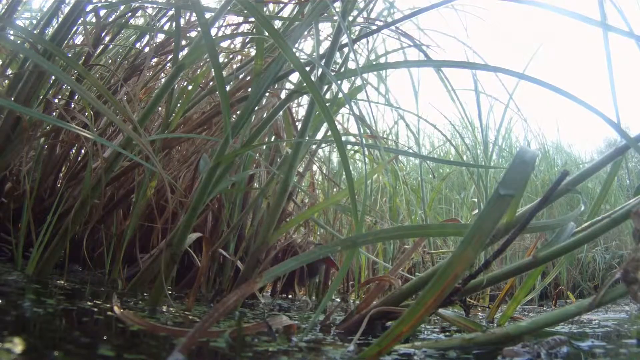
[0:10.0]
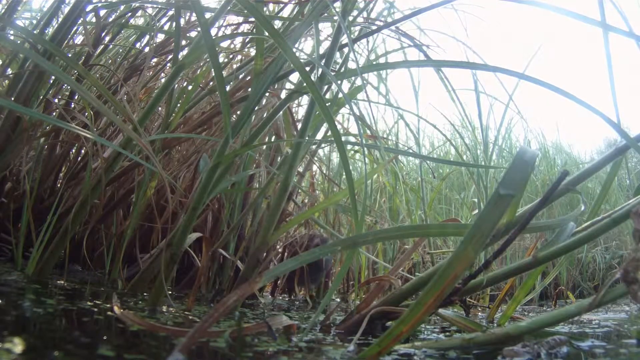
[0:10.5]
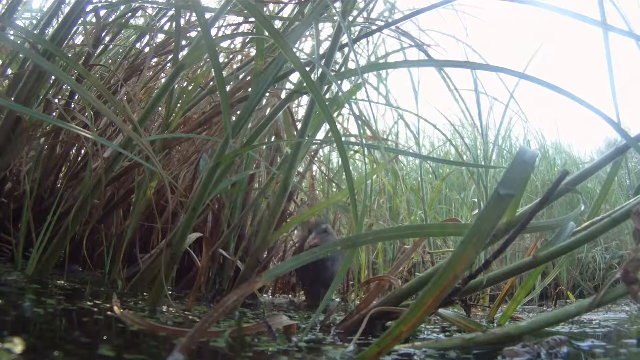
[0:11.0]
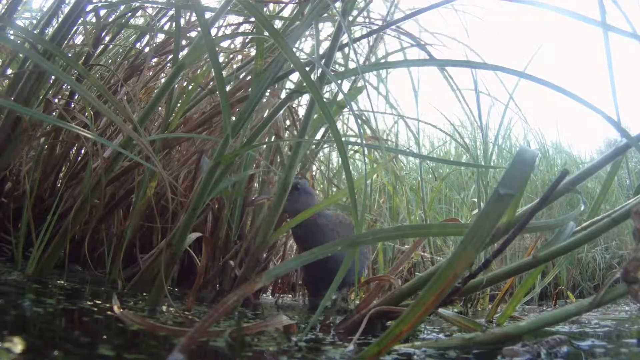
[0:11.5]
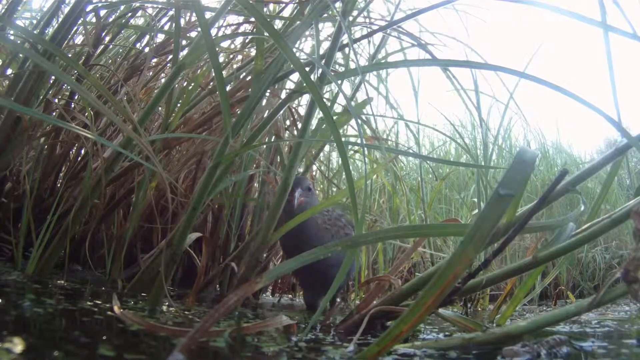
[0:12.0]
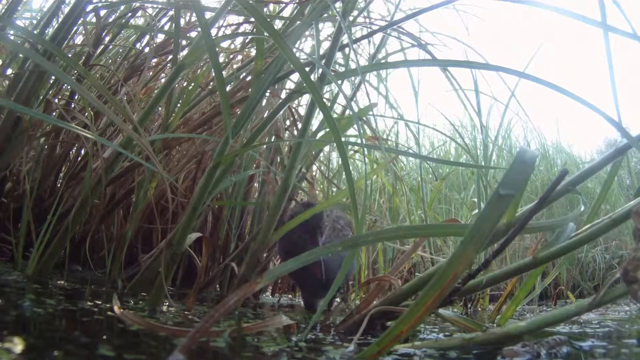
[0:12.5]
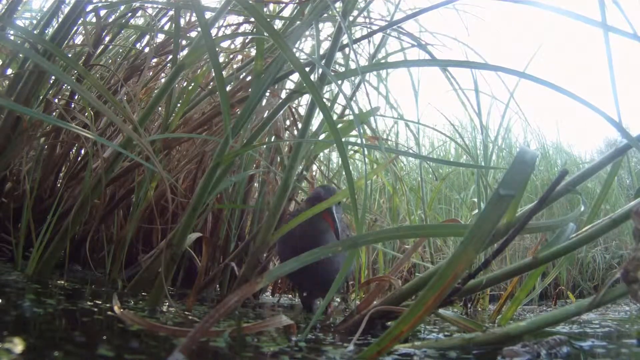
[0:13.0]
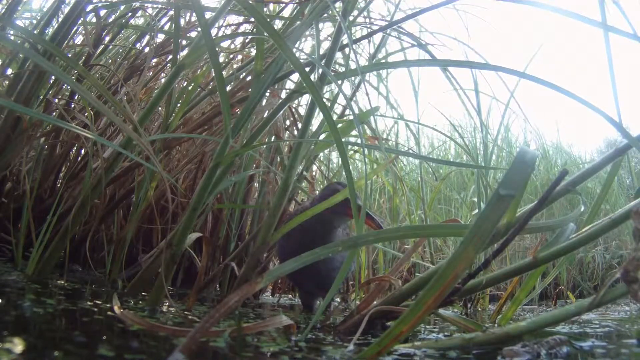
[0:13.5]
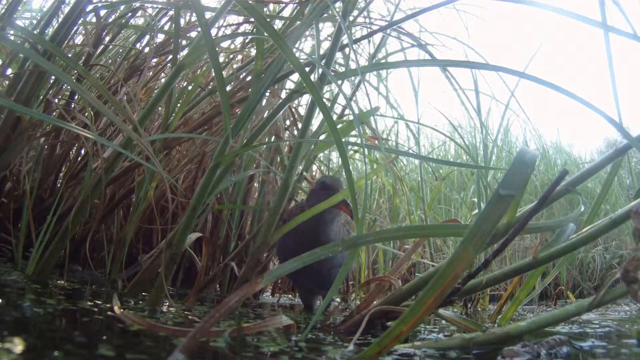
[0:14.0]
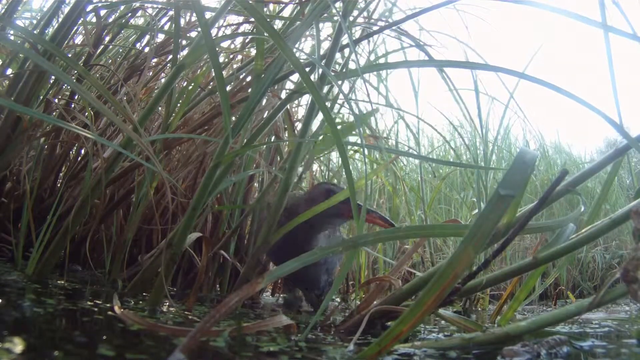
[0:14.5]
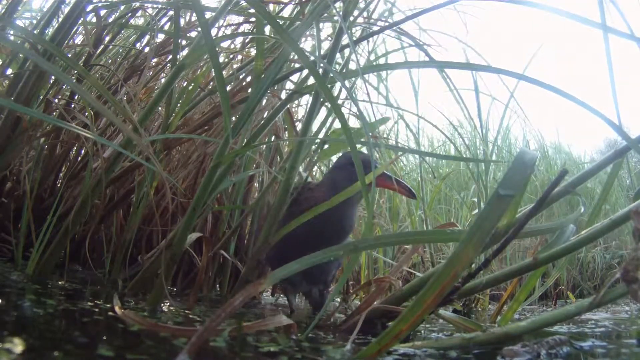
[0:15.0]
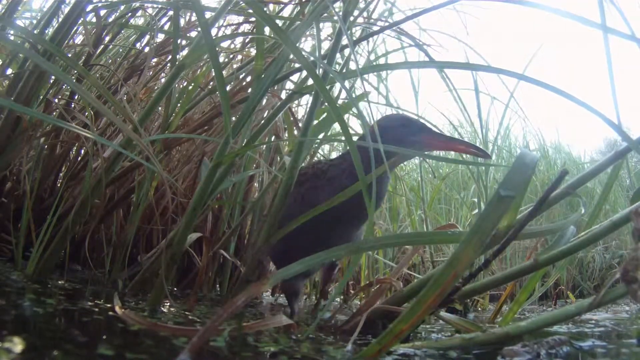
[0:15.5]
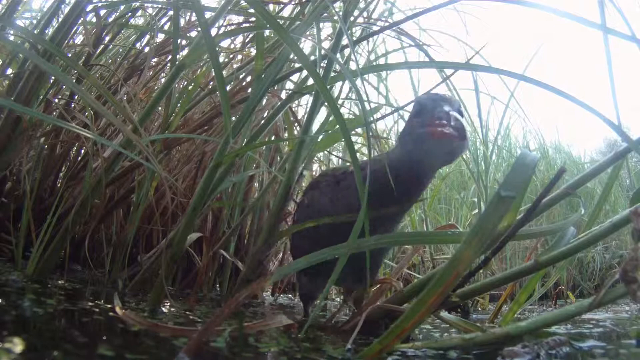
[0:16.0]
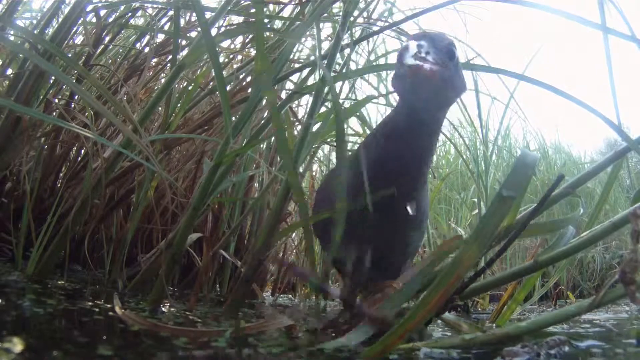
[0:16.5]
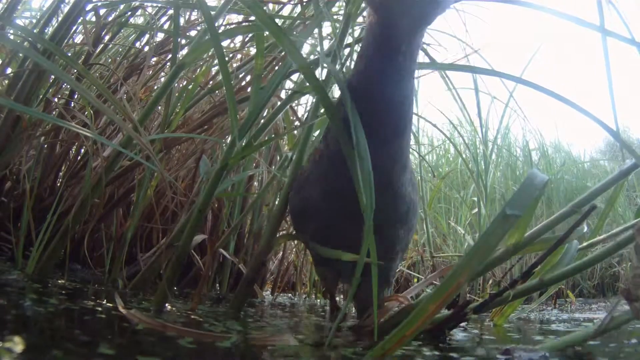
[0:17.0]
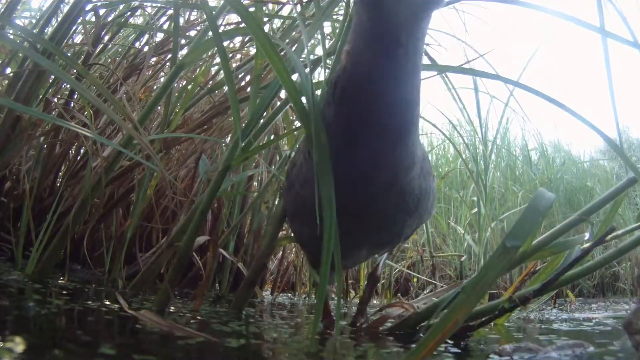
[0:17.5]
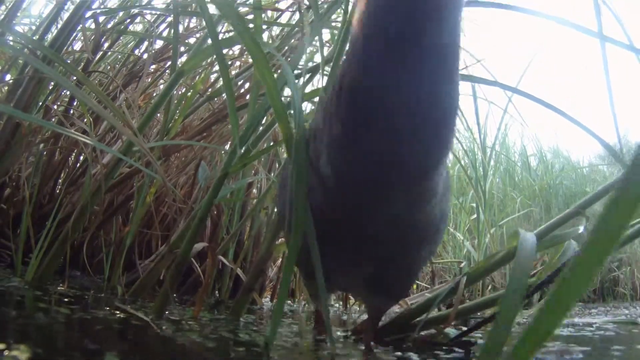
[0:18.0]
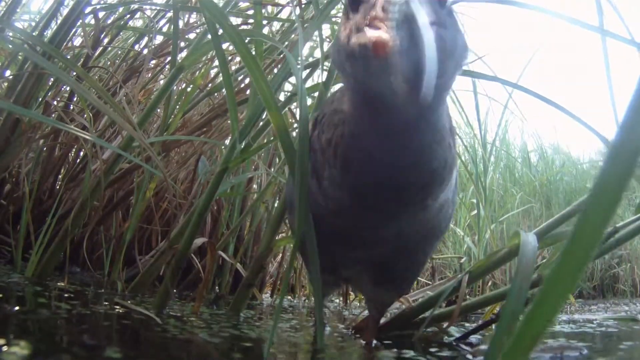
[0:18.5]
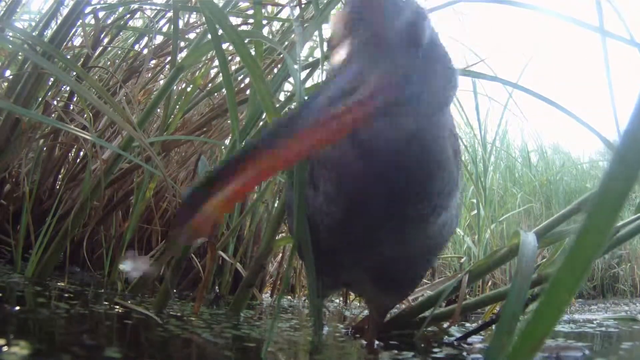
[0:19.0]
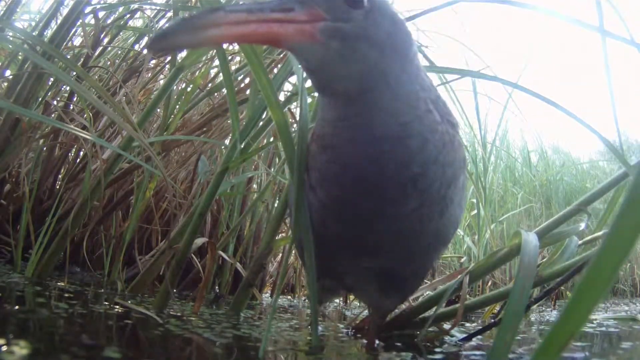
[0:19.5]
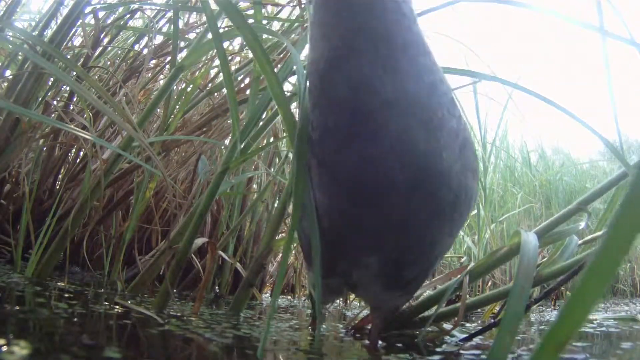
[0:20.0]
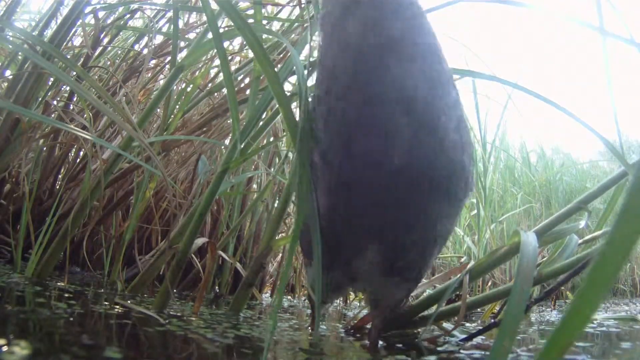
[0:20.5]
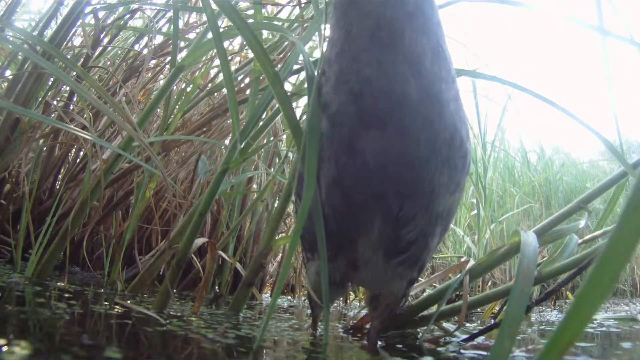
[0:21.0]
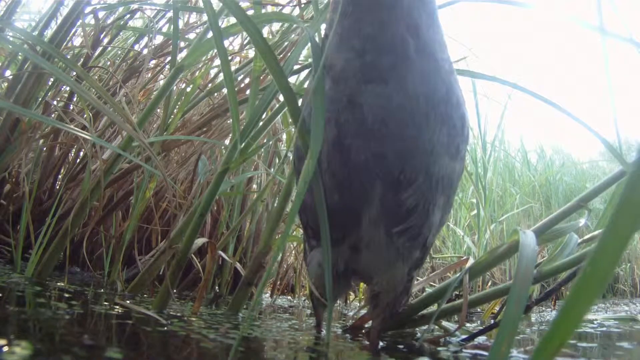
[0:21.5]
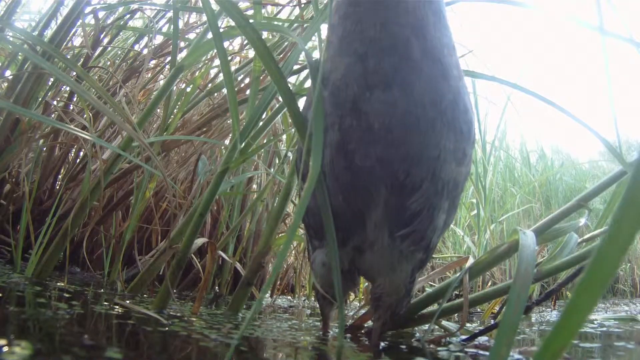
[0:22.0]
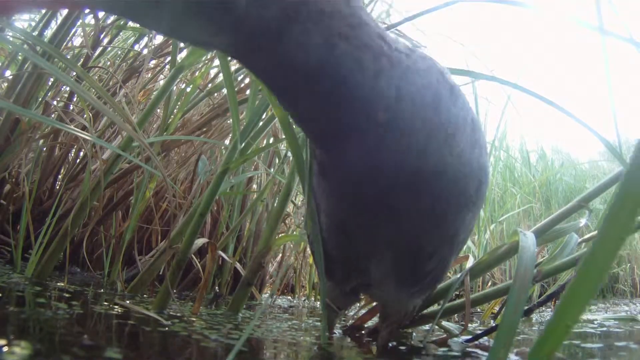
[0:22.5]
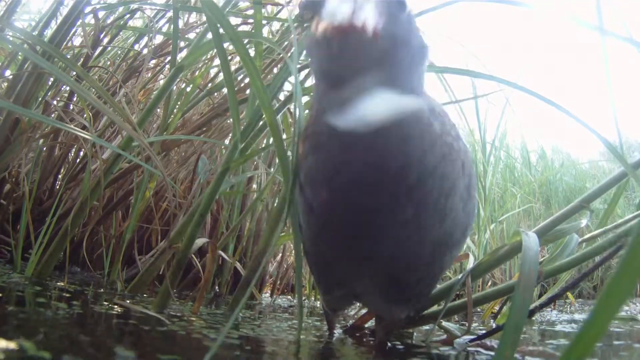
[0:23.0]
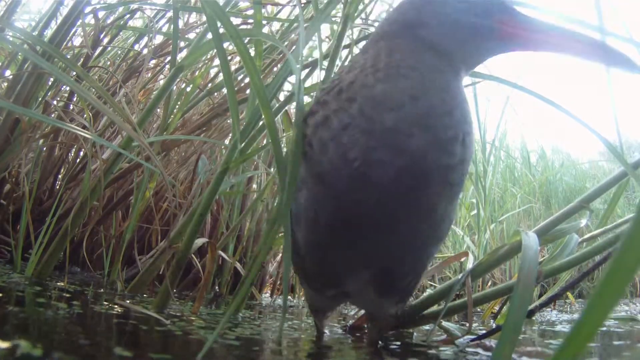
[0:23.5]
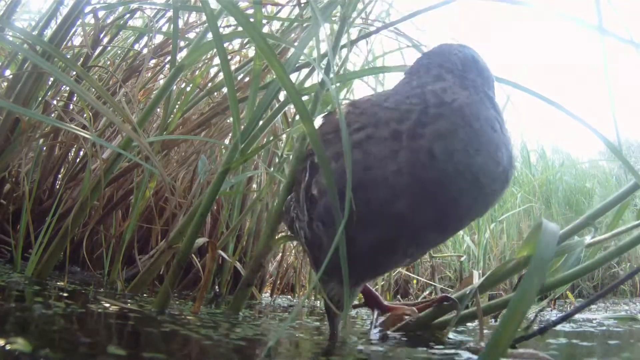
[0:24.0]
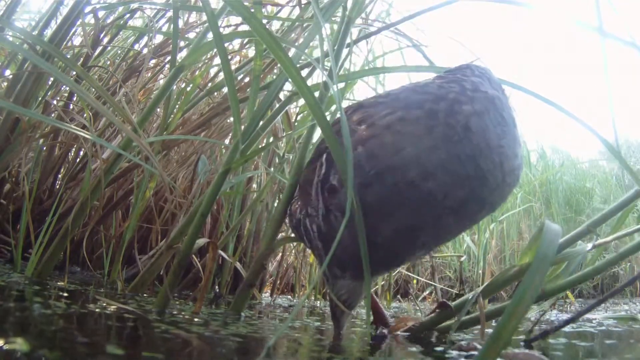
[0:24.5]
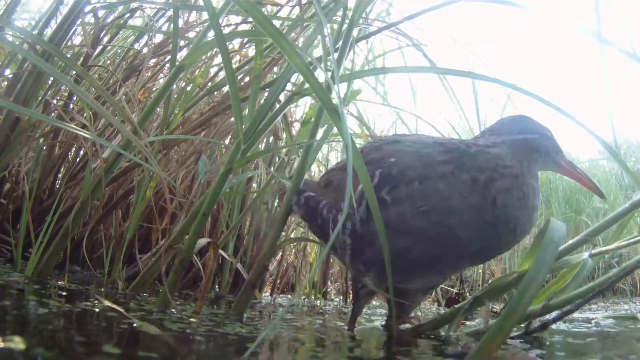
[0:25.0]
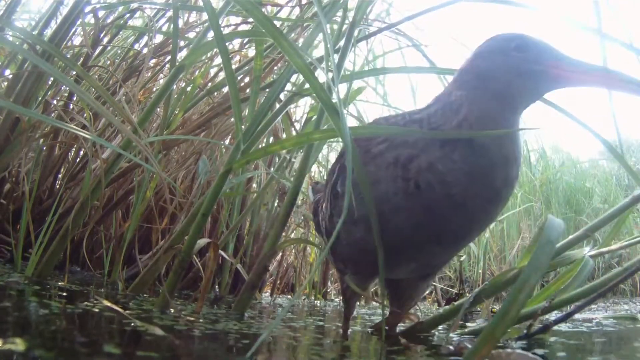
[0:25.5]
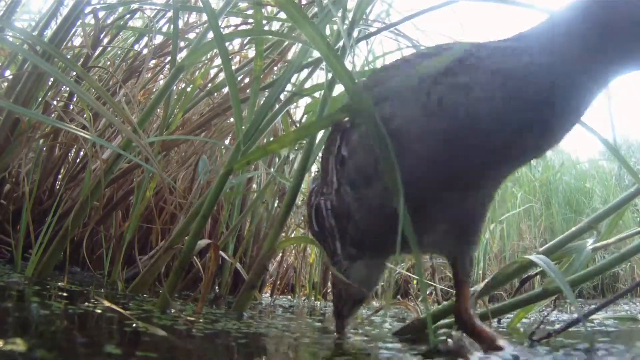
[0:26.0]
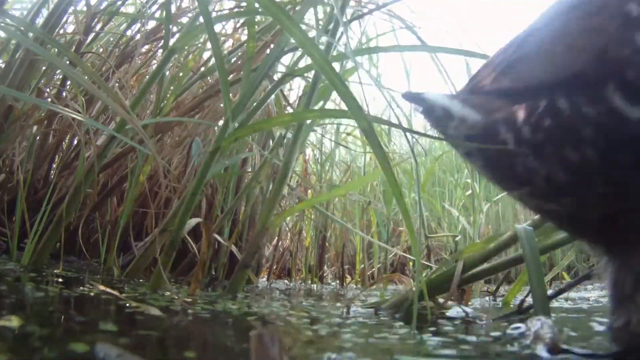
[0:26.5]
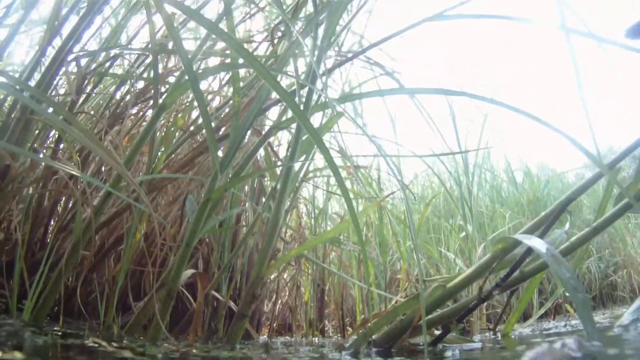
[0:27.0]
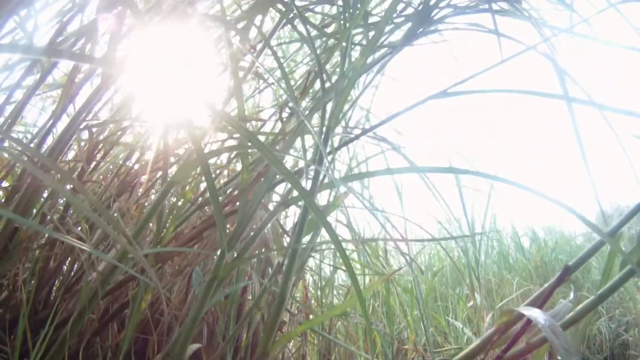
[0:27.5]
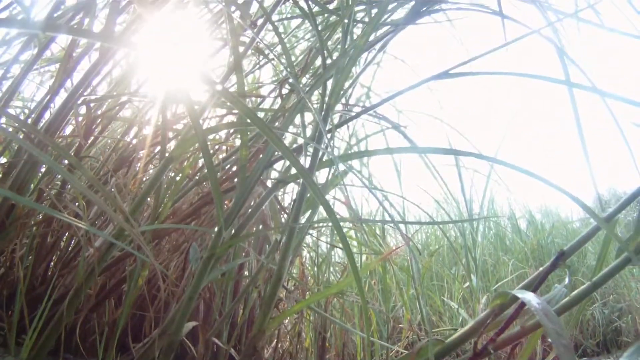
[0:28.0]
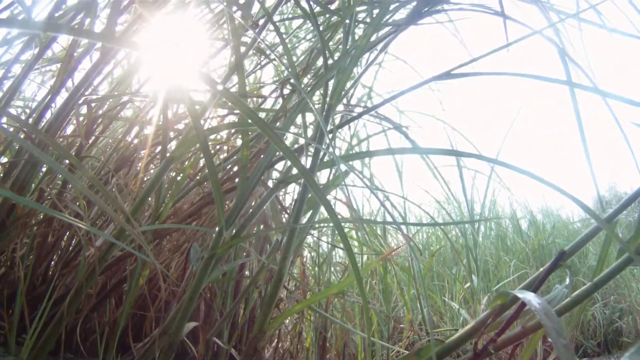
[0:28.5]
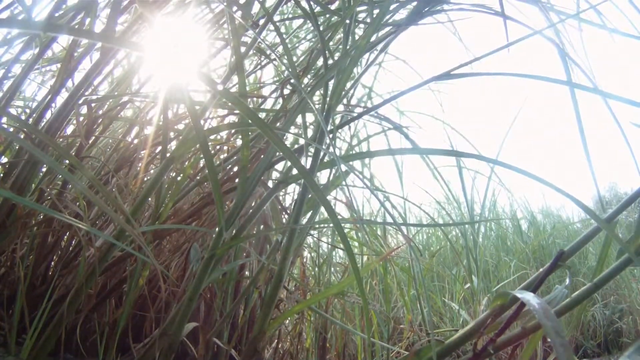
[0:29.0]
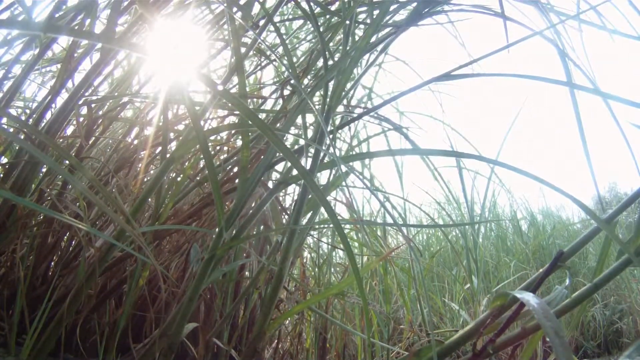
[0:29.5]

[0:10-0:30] The camera keeps filming in the grass, and a little baby bird walks up to it. The bird gets so close that it almost pecks the camera, then kind of looks around in a jittery way and walks past. As it goes past, it touches the camera and tips it over, leaving the camera facing upward toward the sun so the sky is visible. The image is very blurry and not high quality, but the sun is pretty clearly visible, kind of shining through the nearby grass and shining bright at the end.